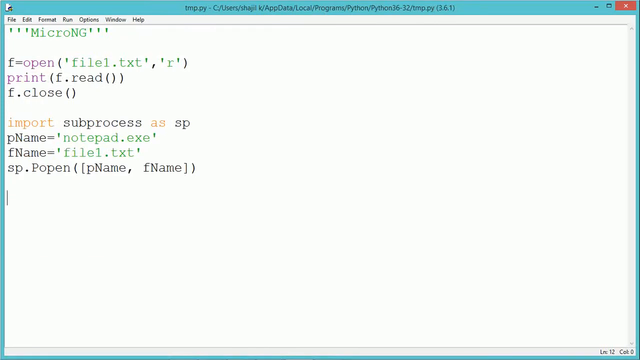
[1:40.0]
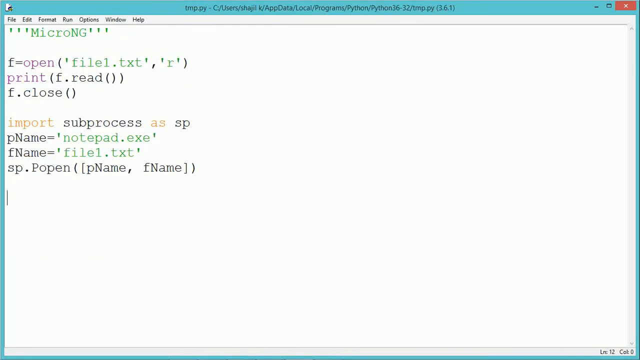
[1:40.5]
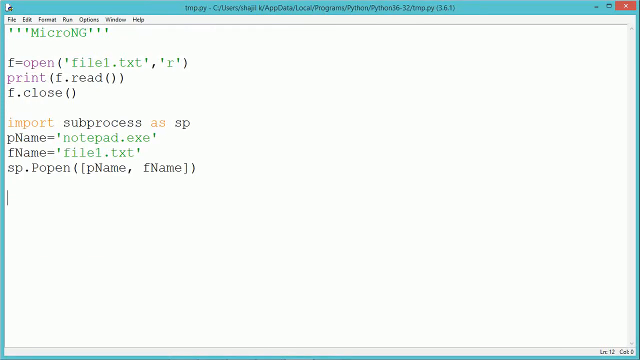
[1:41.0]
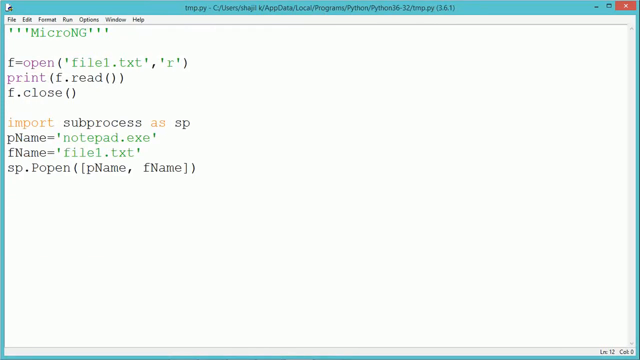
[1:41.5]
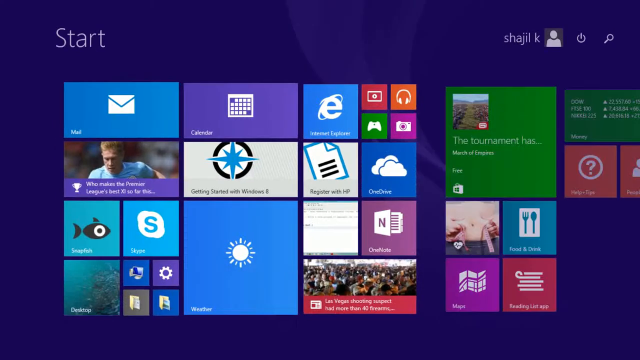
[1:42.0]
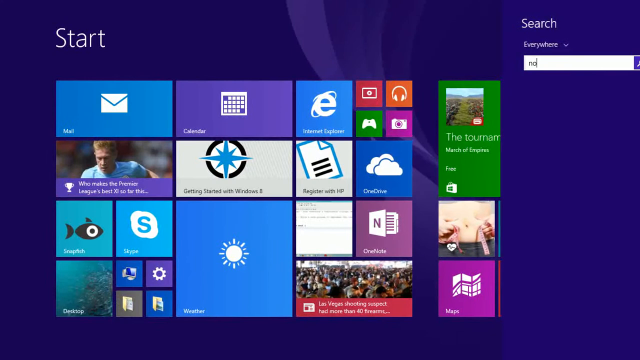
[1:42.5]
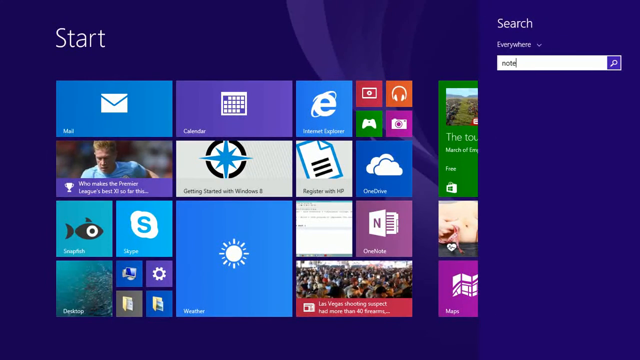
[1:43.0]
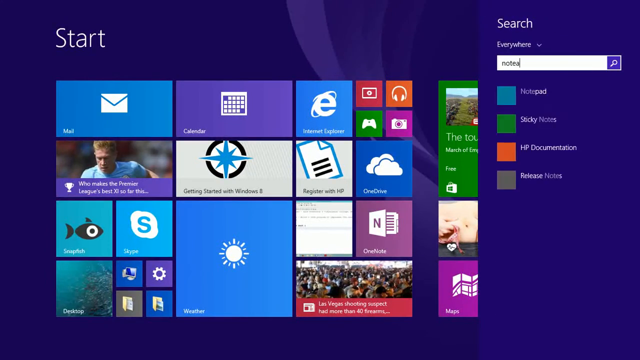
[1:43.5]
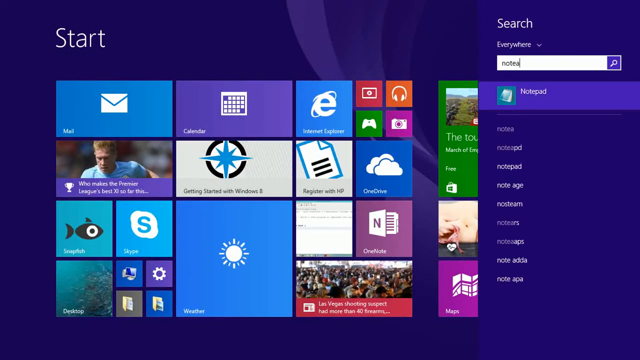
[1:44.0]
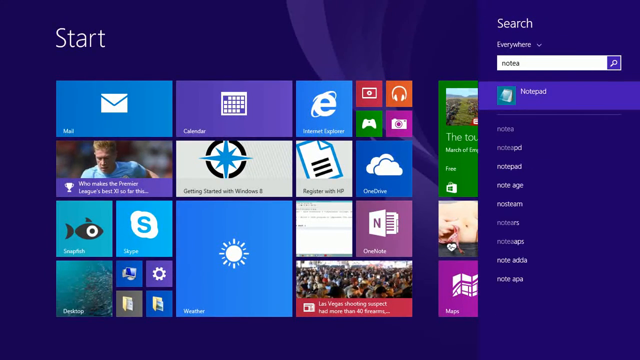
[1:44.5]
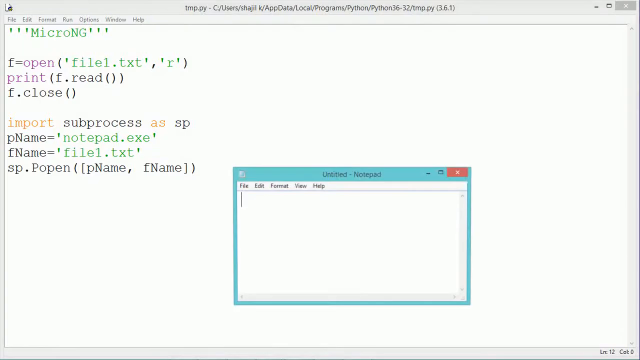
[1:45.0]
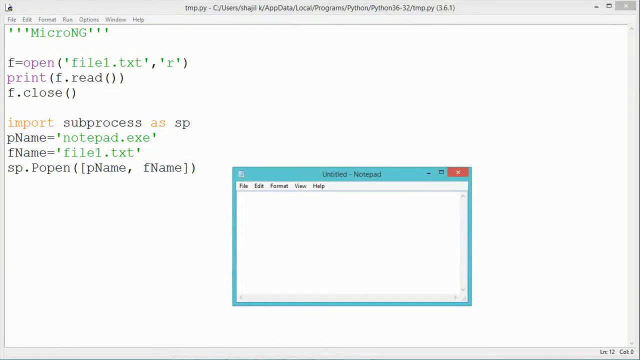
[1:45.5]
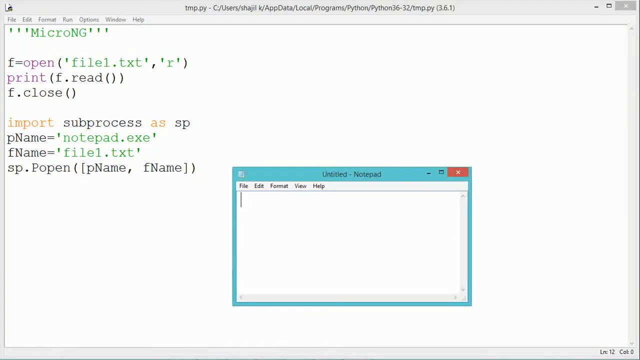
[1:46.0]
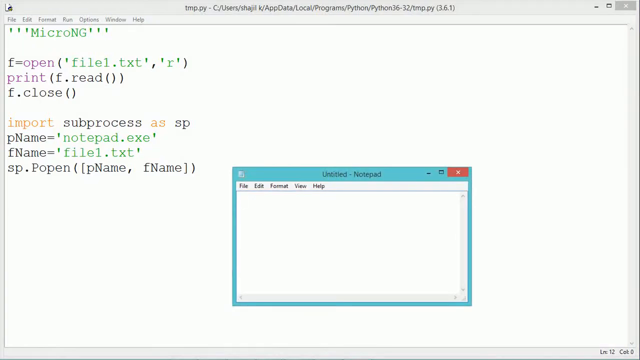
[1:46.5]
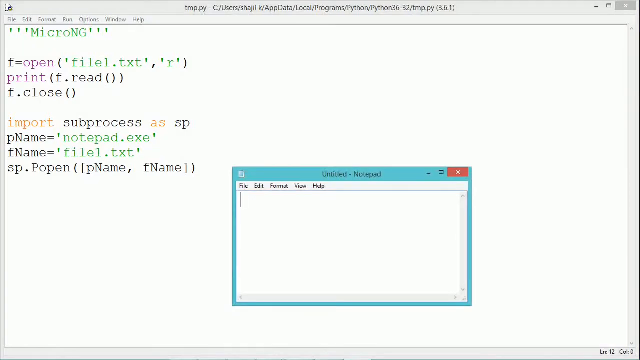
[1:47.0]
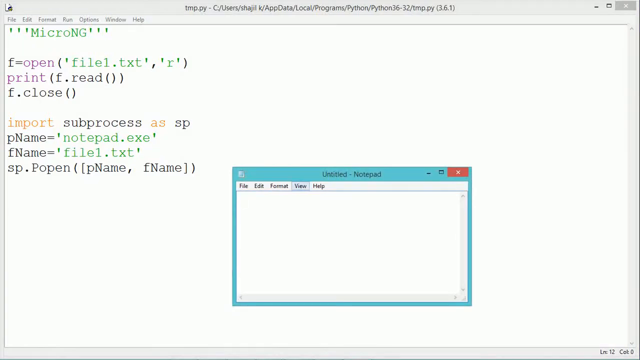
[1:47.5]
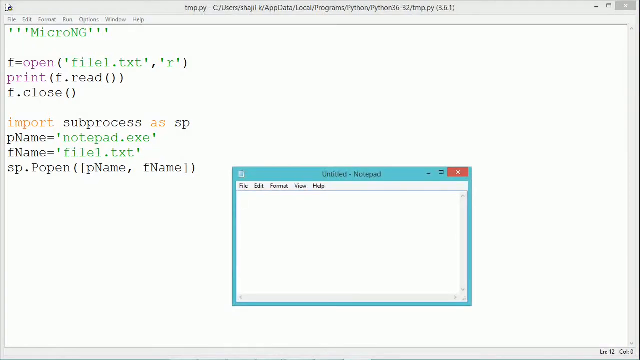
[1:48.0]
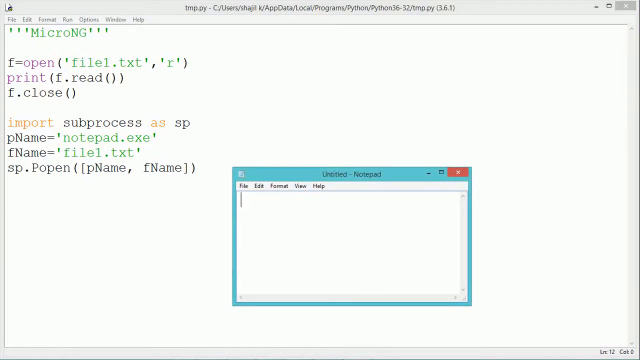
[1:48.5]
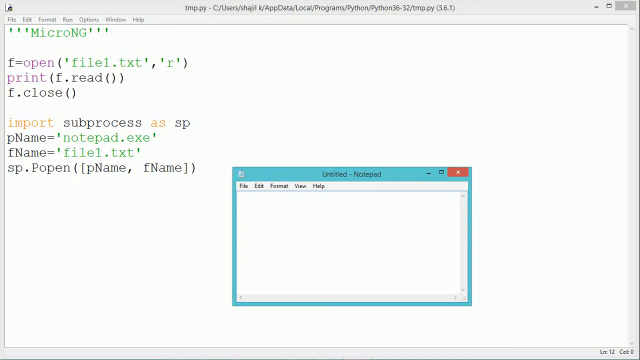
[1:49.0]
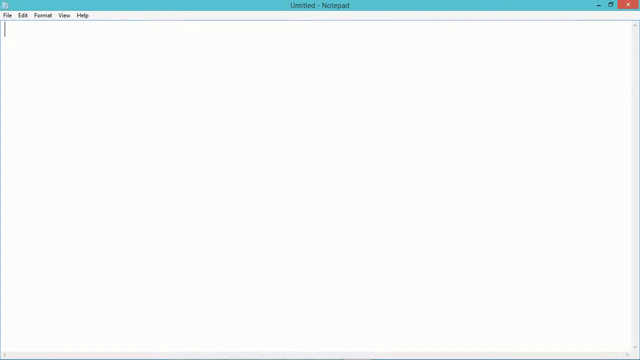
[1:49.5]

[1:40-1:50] The Python program is saved as tmp.py. The user presses the Start button and the blue Start menu appears again. The user clicks the search icon, searches for Notepad and opens it. Notepad opens as a pop-up above the Python compiler; the pop-up is white with a blue outline, and the file name is Untitled. A few options appear at the top left of Notepad: File, Edit, Format, View and Help.